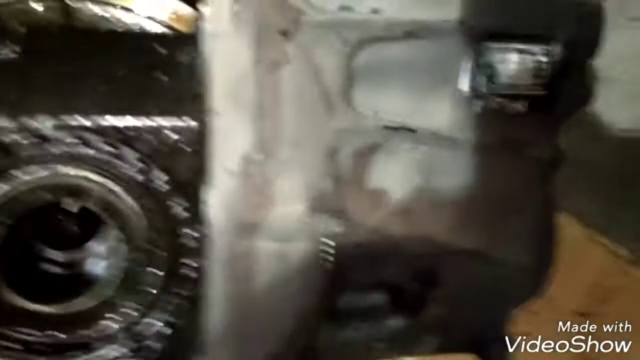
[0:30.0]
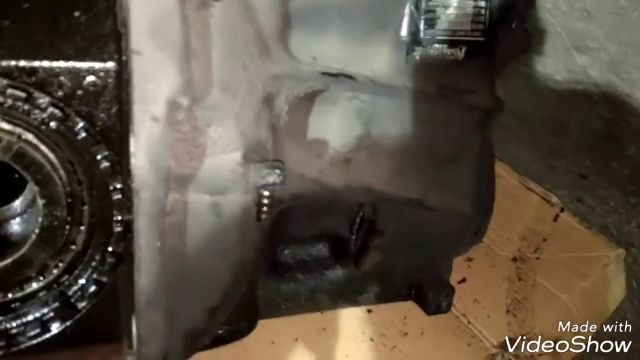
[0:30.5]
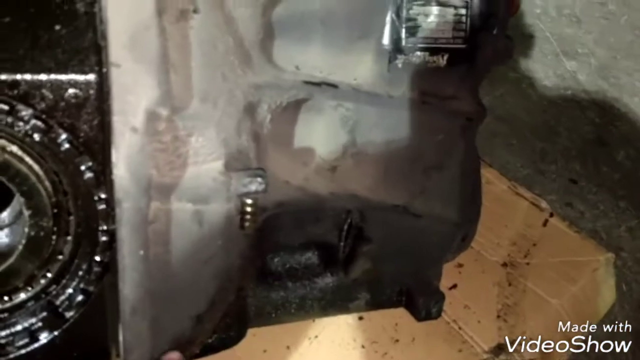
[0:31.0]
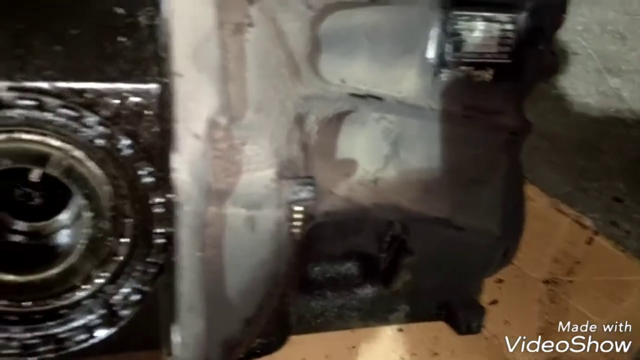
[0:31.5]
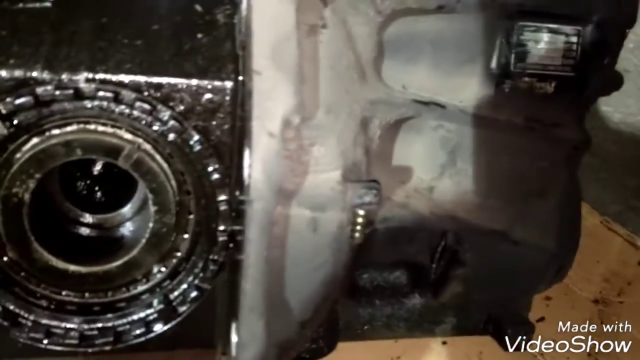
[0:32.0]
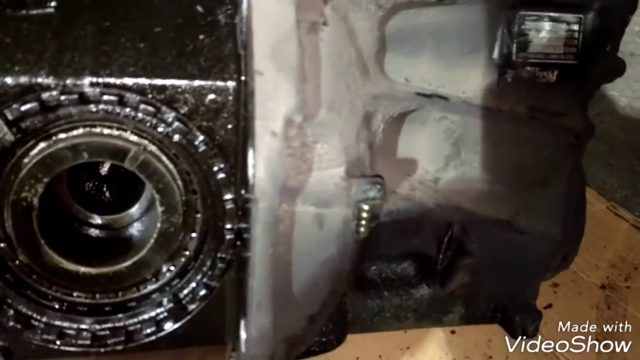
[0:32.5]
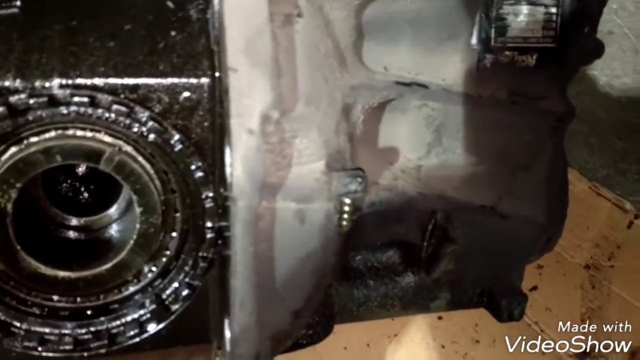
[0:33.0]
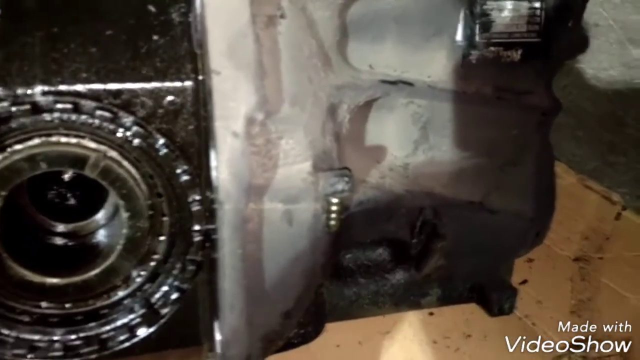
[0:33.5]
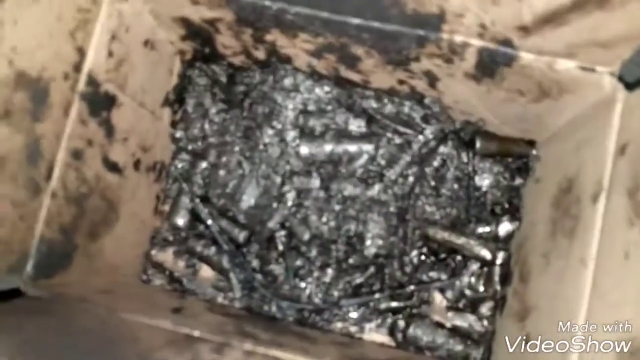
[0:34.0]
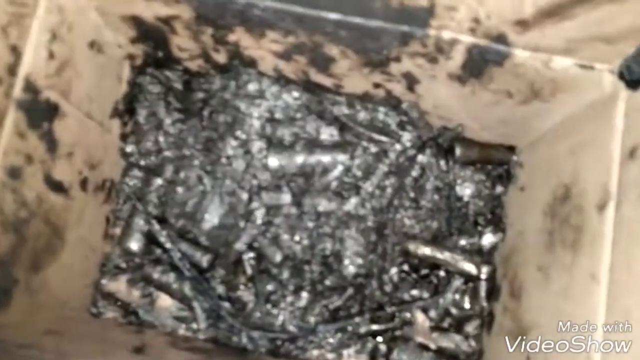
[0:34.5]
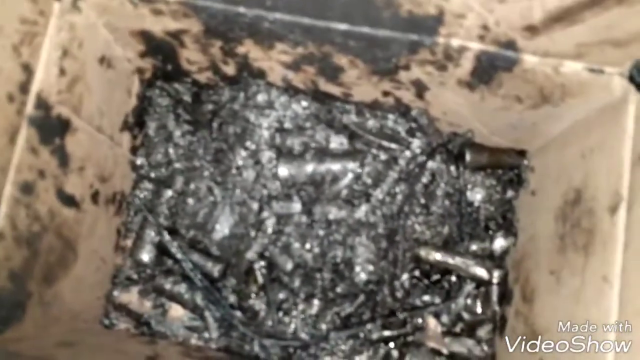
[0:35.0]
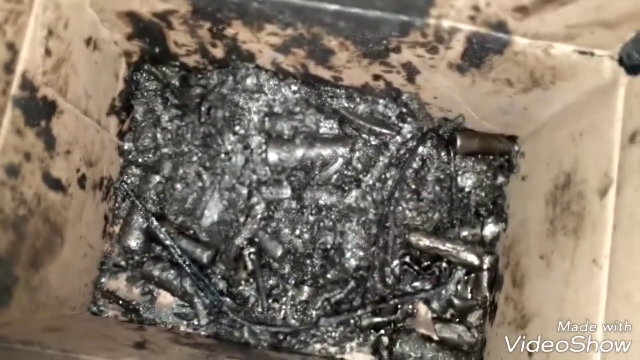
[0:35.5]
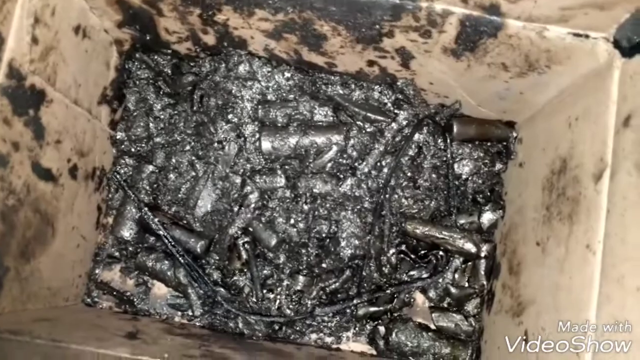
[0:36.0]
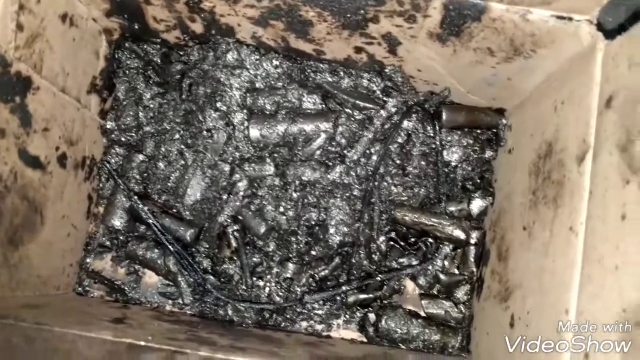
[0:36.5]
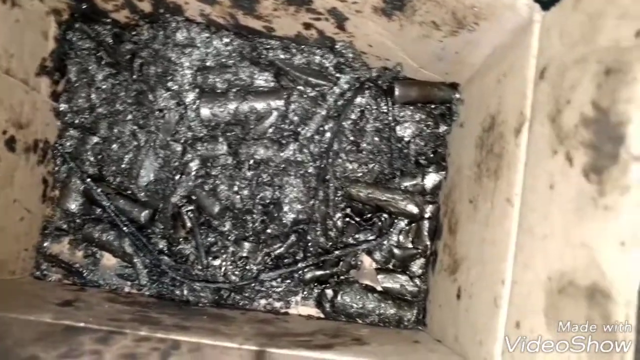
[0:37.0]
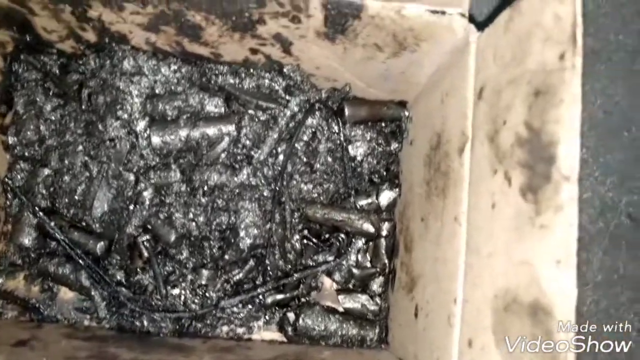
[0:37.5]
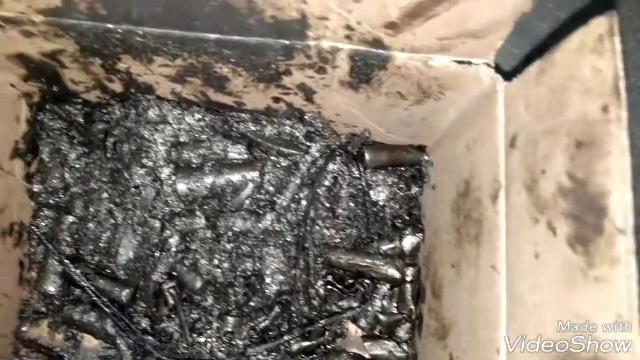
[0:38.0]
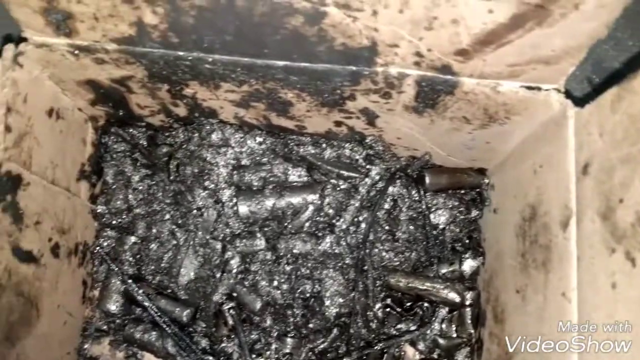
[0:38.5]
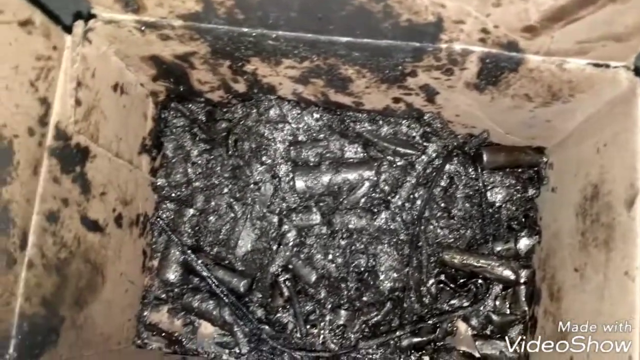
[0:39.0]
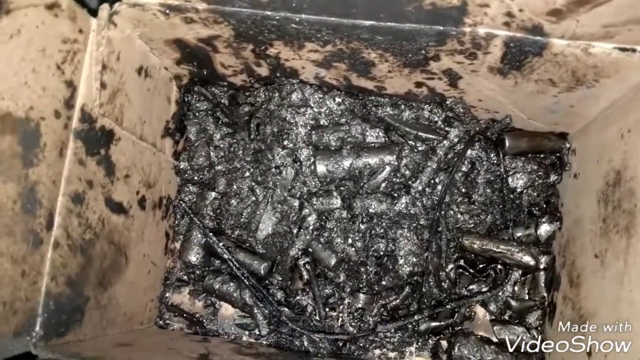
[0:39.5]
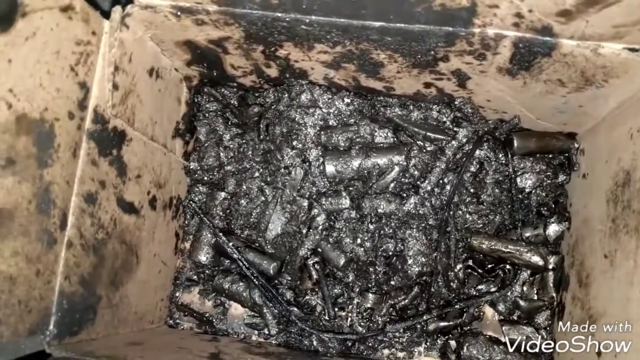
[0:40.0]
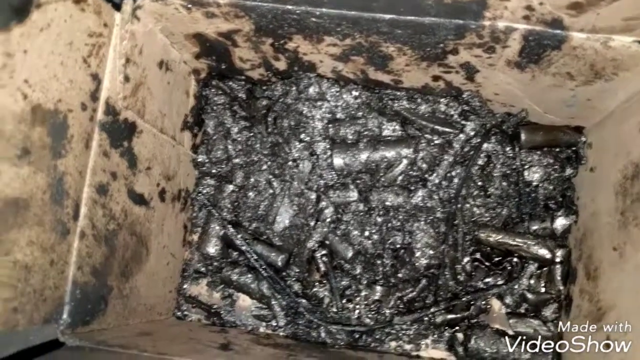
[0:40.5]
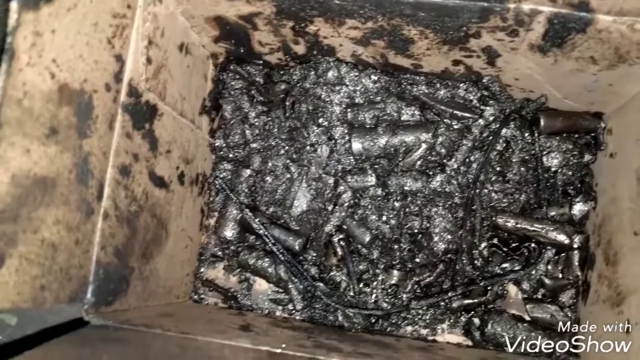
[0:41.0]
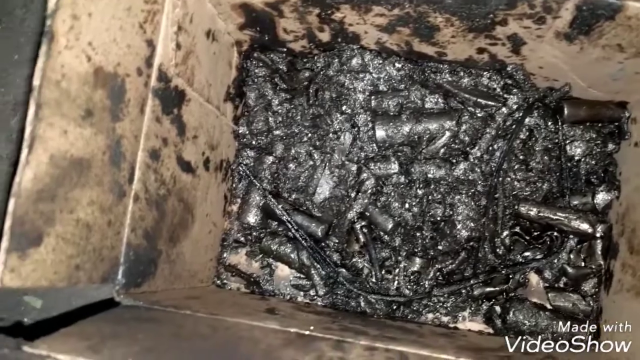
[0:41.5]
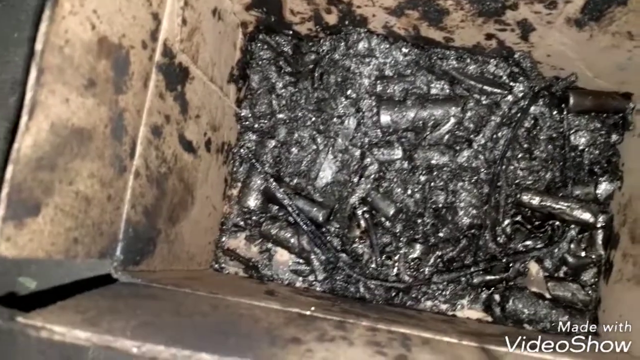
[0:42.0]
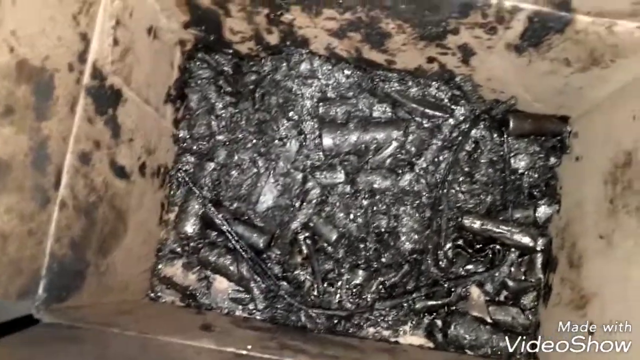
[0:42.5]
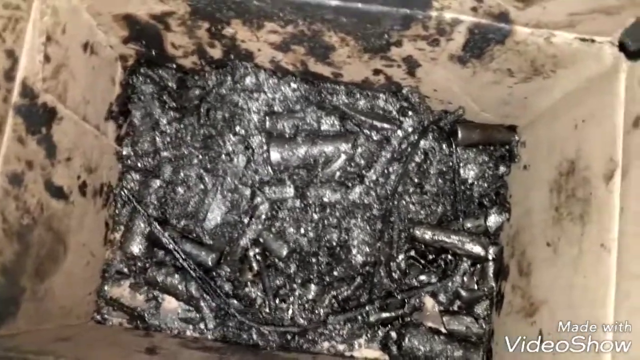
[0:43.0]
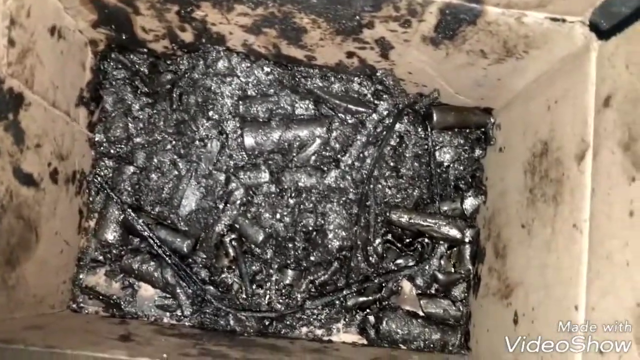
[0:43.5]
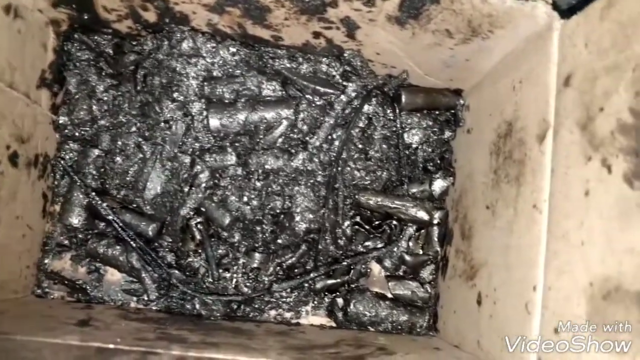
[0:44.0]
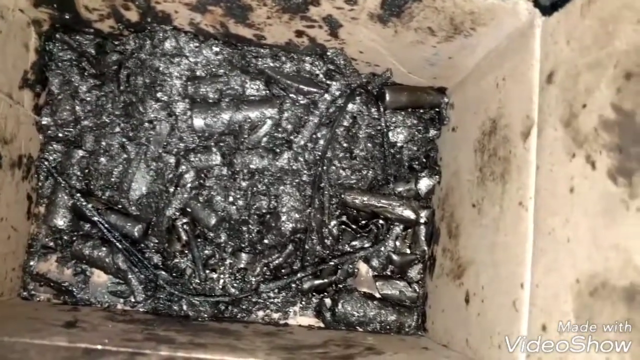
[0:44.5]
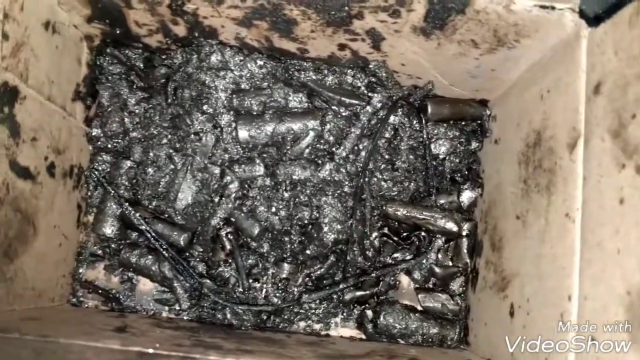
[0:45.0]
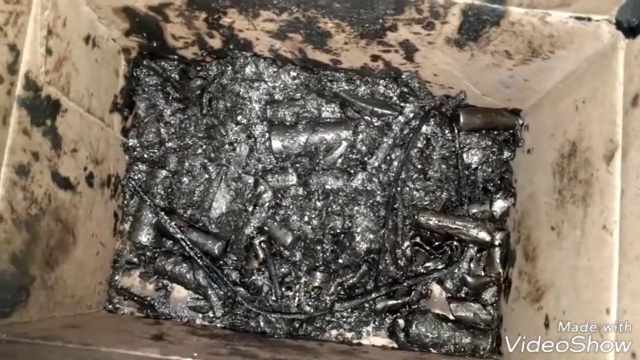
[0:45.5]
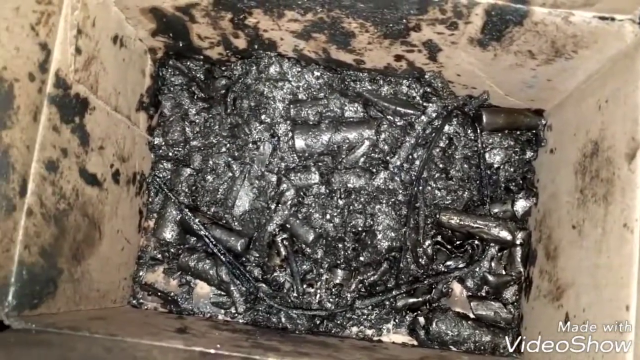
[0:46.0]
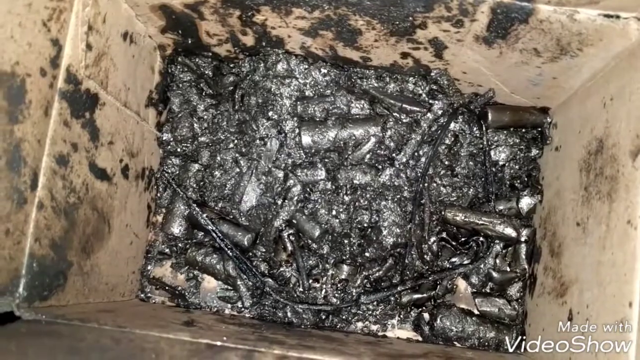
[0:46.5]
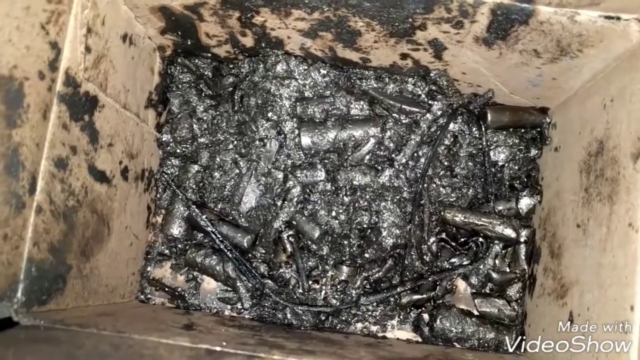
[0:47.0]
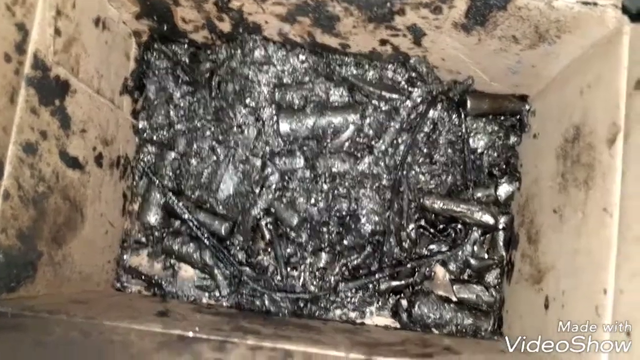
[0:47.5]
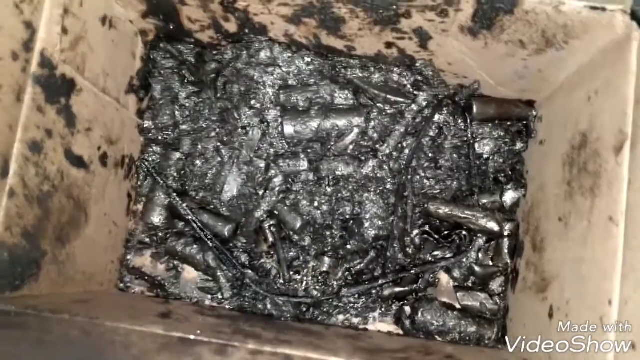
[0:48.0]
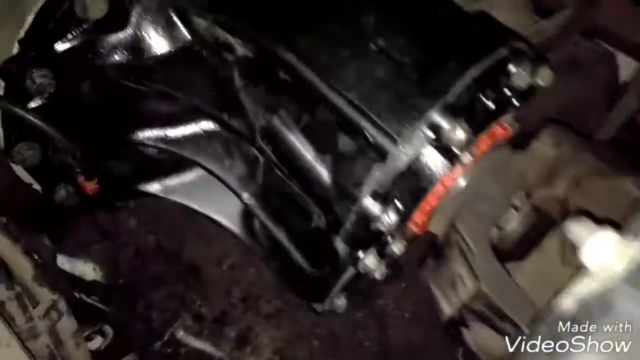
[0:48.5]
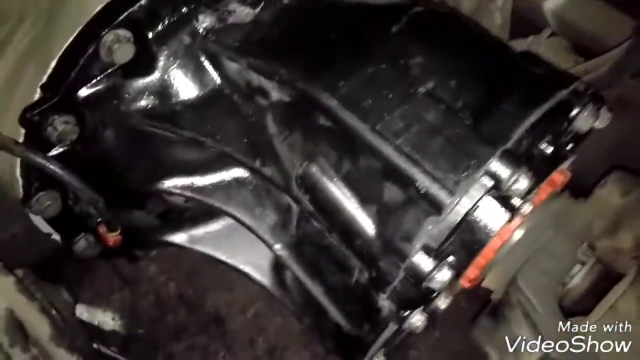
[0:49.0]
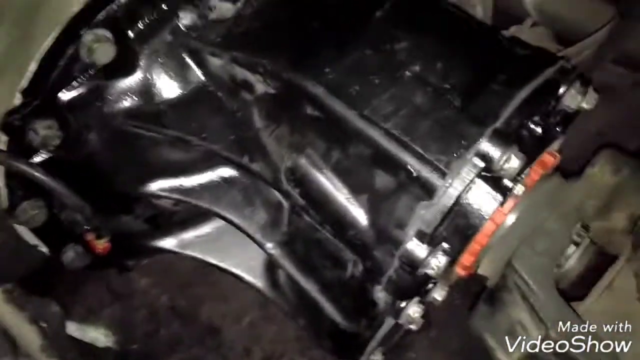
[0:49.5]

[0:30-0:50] The words "made with Video Show" appear in the bottom right corner. The view looks down at a piece of machinery for an automobile, sitting on a piece of cardboard that is on a concrete surface. The video goes close to the body of the object, then moves to a cardboard box that is oily and greasy inside. At the bottom of the box there appear to be silver shards of metal of different sizes; they almost look melted but look like they have been ground. The video hovers over the box, with black motor oil around its edges. Then it returns to the cast iron piece of machinery, which now appears to have been painted and is black and shiny, and it also appears to be inside a vehicle, having been replaced or put back in.